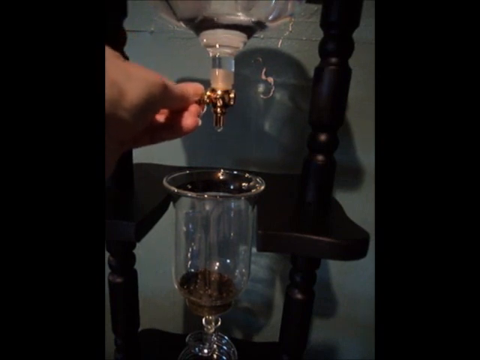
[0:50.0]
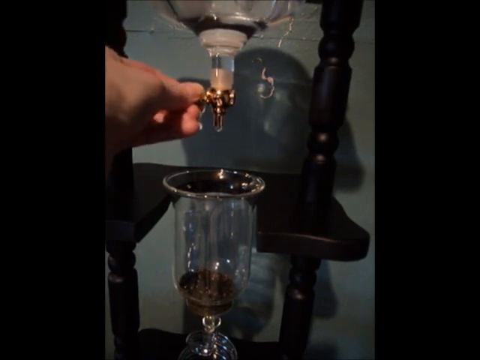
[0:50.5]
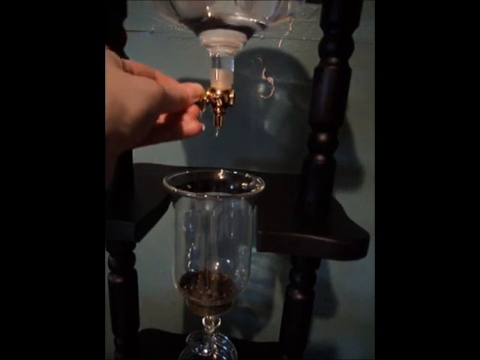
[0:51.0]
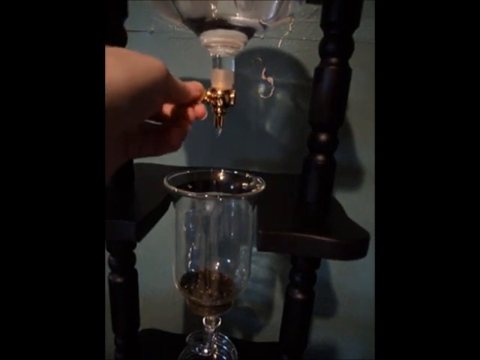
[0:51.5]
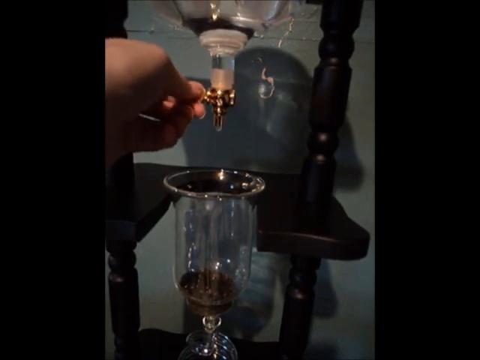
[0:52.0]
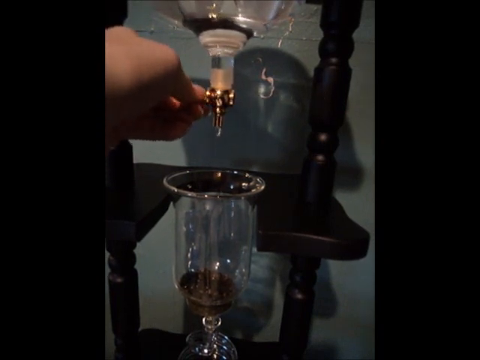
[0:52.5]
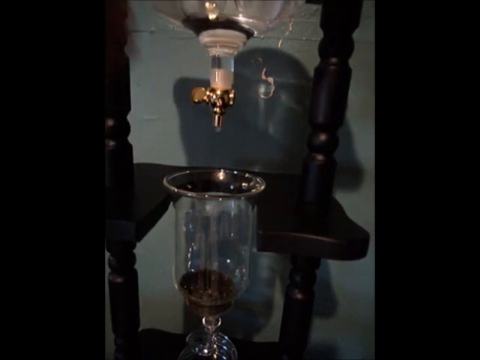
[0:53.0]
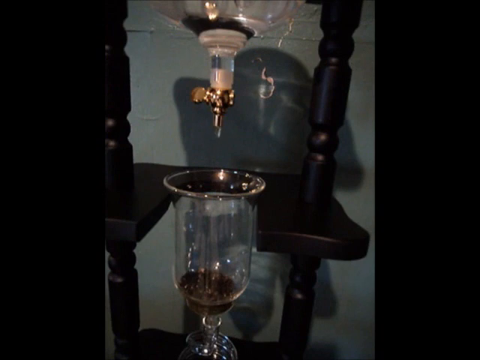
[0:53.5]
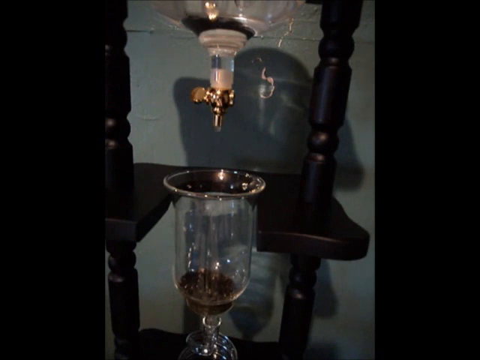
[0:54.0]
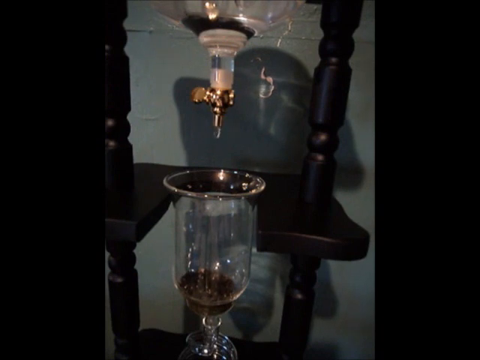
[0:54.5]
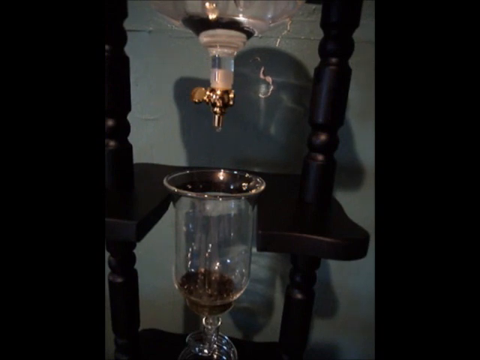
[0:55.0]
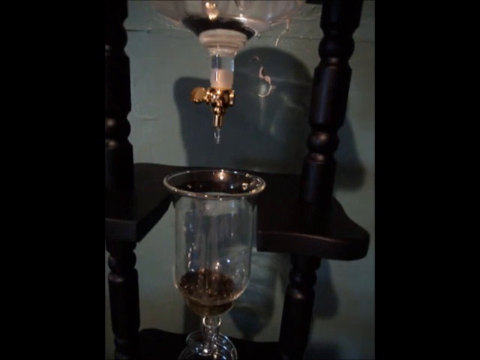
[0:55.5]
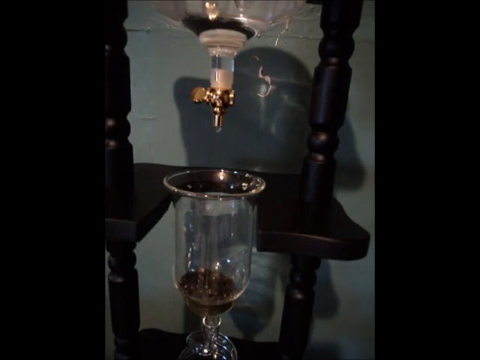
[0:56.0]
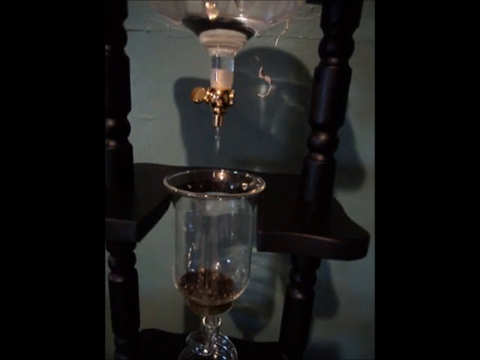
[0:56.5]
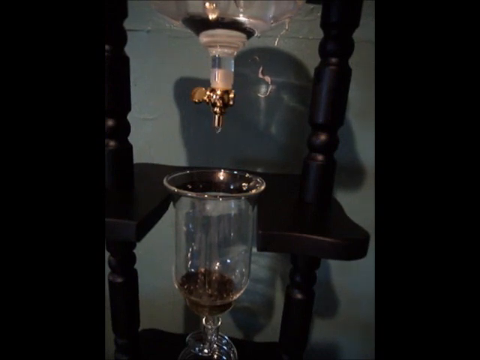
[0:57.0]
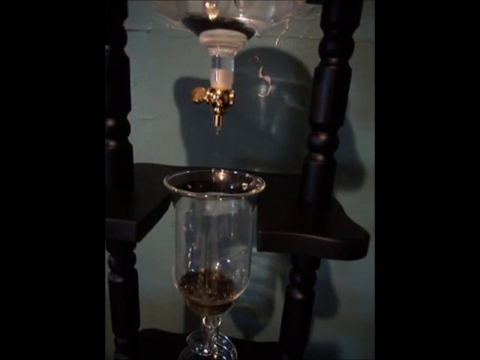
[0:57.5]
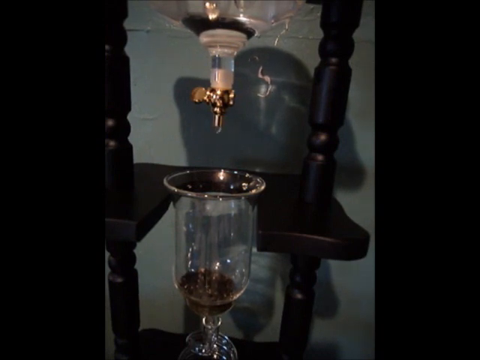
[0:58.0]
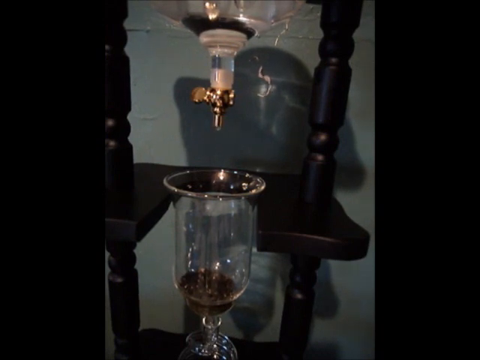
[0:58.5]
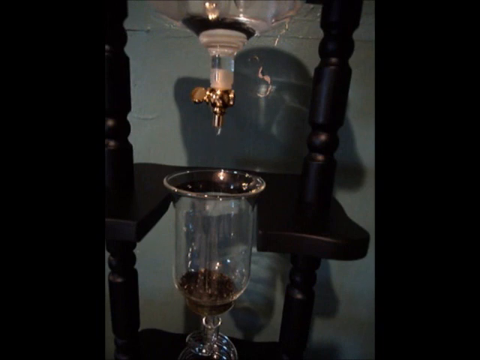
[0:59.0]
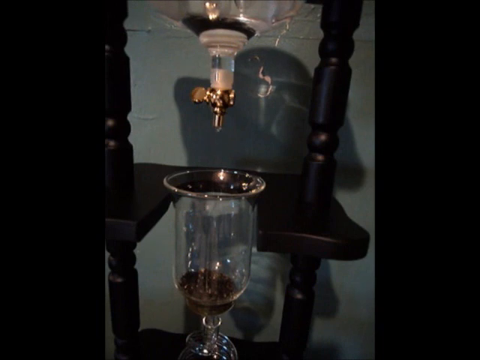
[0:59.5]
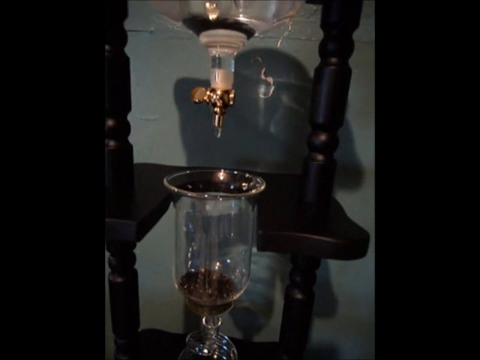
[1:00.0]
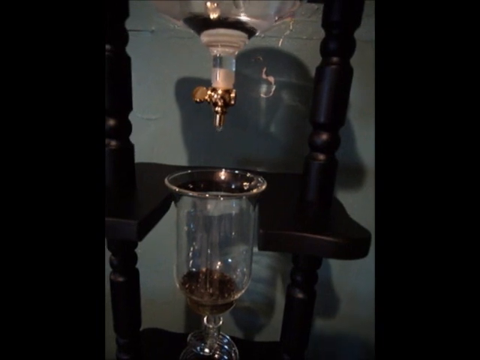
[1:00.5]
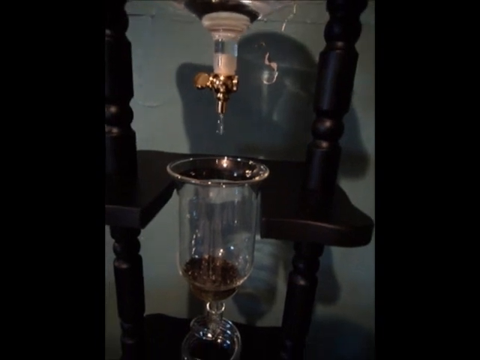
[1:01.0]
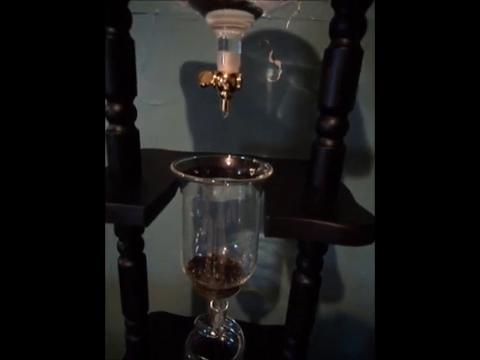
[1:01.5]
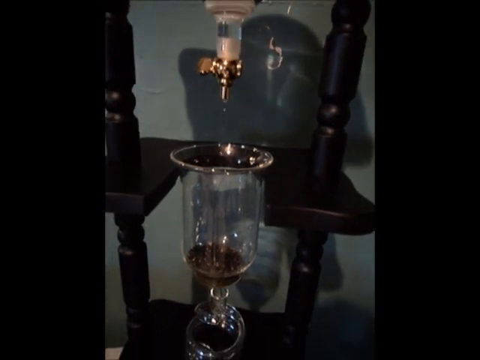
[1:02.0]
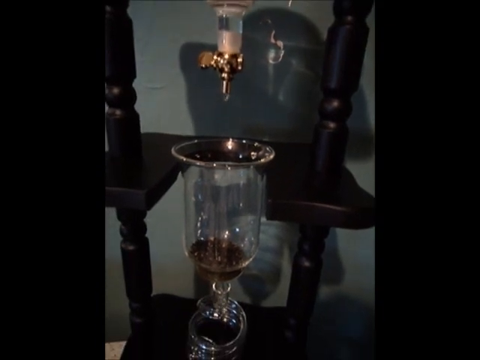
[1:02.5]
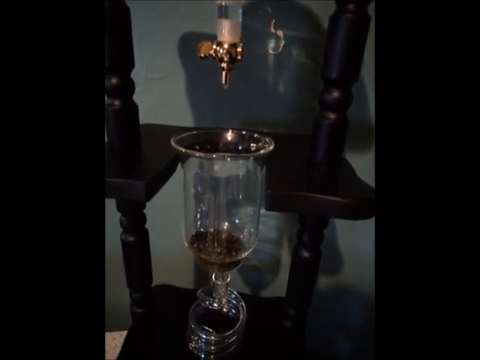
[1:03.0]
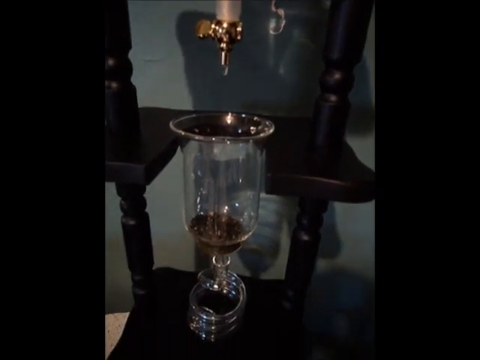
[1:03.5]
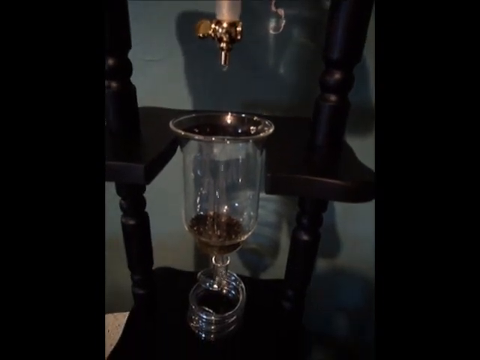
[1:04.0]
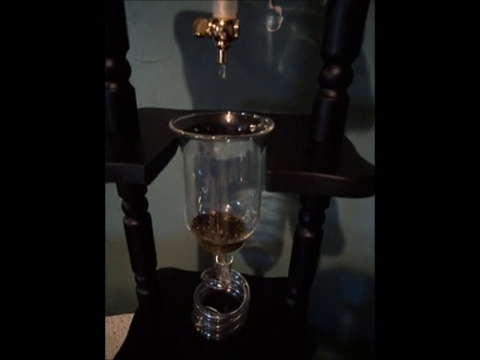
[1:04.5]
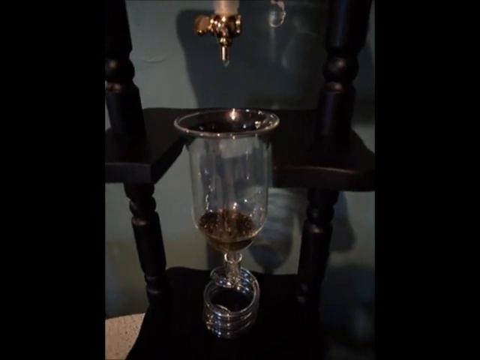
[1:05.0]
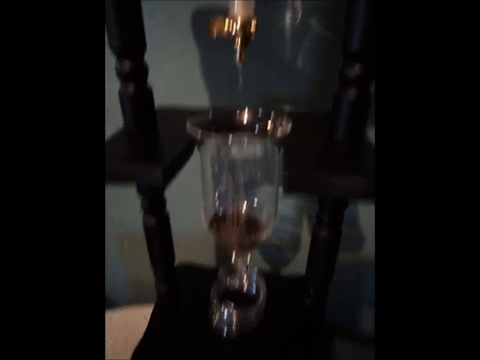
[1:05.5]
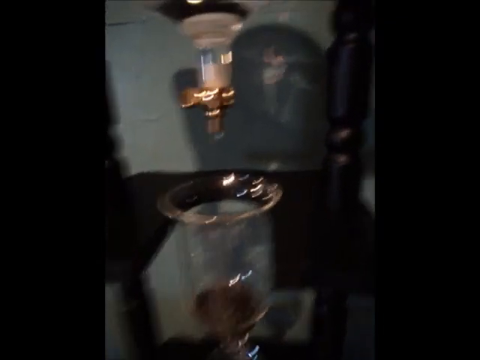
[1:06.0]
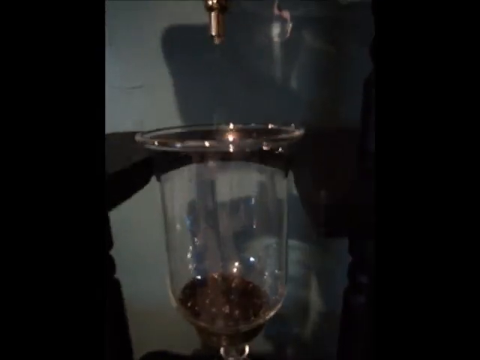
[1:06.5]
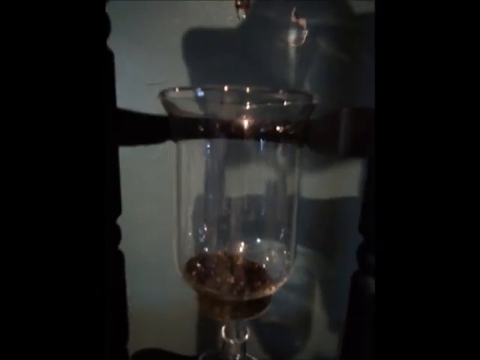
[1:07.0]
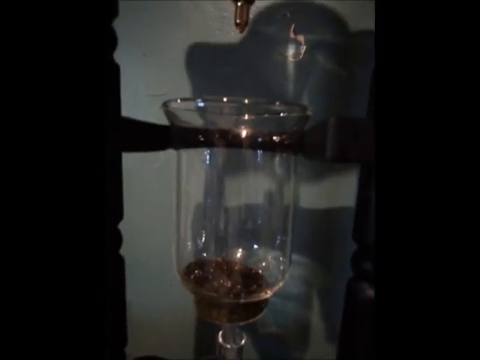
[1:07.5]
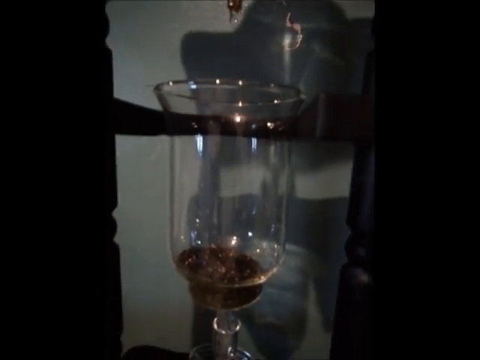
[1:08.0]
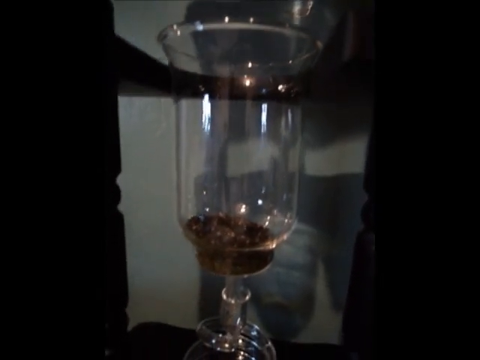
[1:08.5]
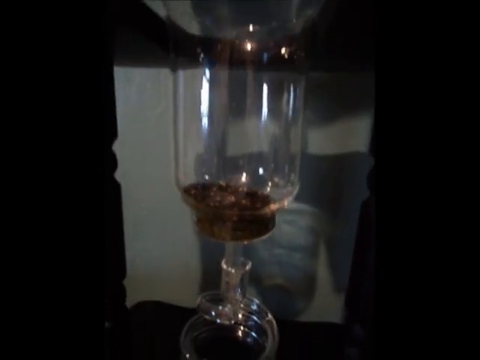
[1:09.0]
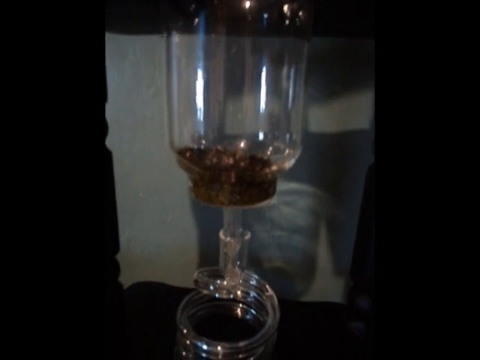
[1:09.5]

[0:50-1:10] The view is zoomed in just below the top shelf, where the nozzle sticks down: a brass tip, then glass going up, then white, then more glass. Below it is the second shelf, whose front is cut out, with a glass bowl-like piece fitted in that has a brim at the top. A hand comes in from the left with fingers outstretched, goes to the left side of the brass fitting, and turns it. Water starts slowly dripping from underneath, then the flow opens up and more water drips out, and the hand turns it back the other way. Now it is just barely dripping, maybe one drip every second. The liquid at the top kind of moves around, and the water drips down into the glass below, which looks like it has something darker in the bottom that cannot really be made out, possibly tea leaves. The camera moves down a little, with the bronze nozzle barely visible at the top and a shadow from it on the wall. Below the glass piece that looks almost like a mason jar, a spiral glass piece comes down, going around about four times before passing down through the next shelf. The camera then zooms back in close, looking straight ahead at the top nozzle dripping water, and moves down to show the bottom of the mason-jar-like piece, which looks like it has tea leaves in it.